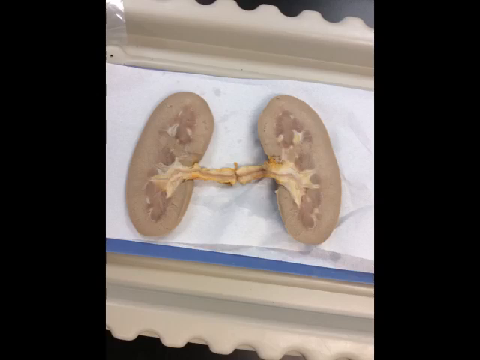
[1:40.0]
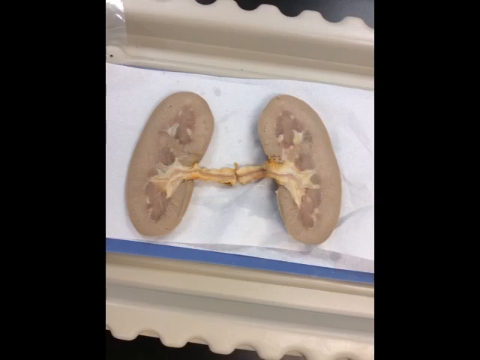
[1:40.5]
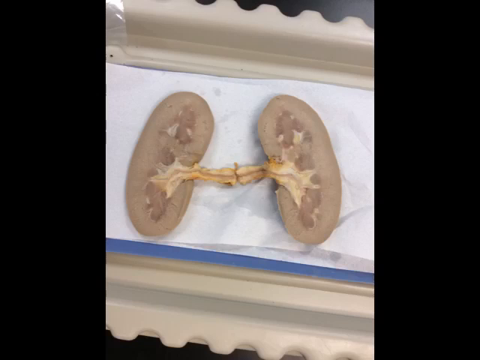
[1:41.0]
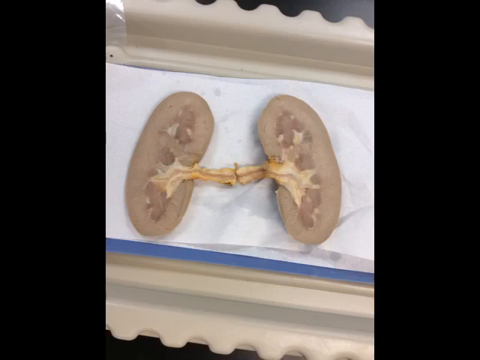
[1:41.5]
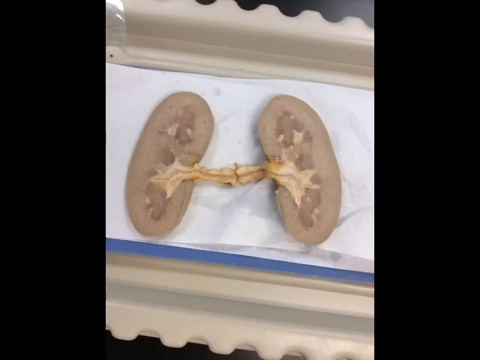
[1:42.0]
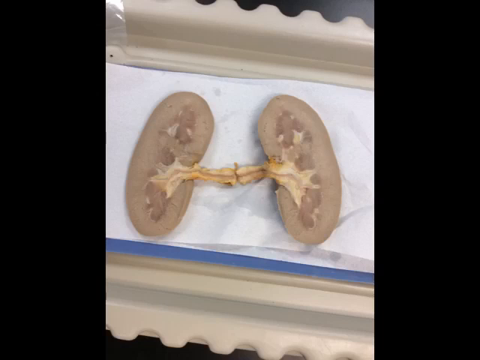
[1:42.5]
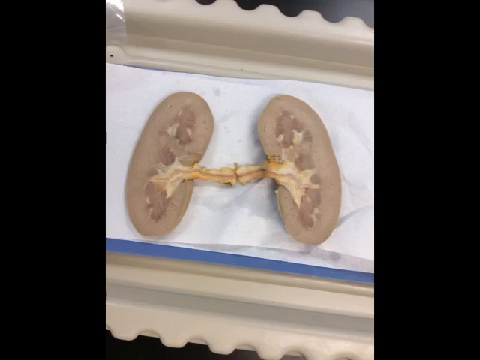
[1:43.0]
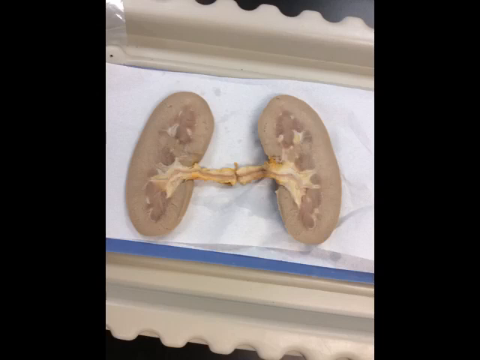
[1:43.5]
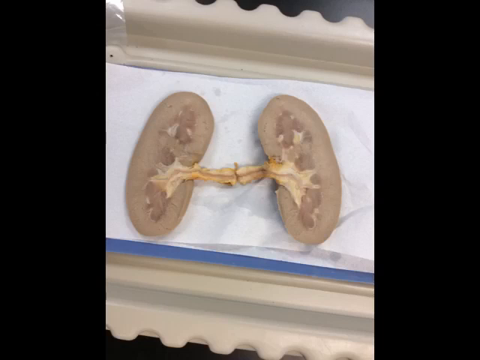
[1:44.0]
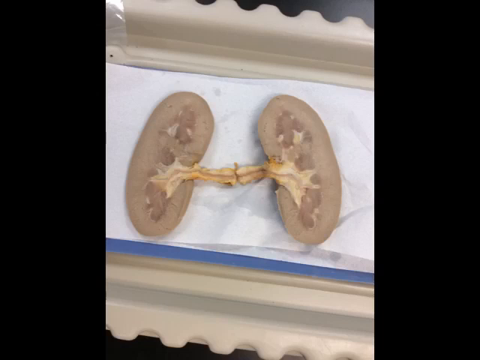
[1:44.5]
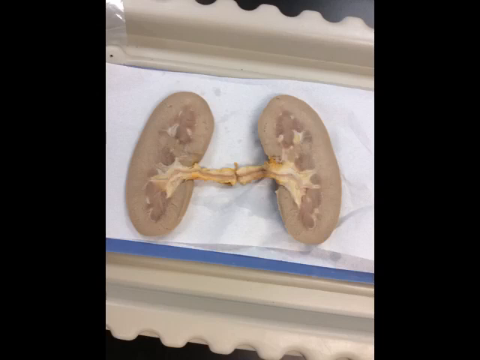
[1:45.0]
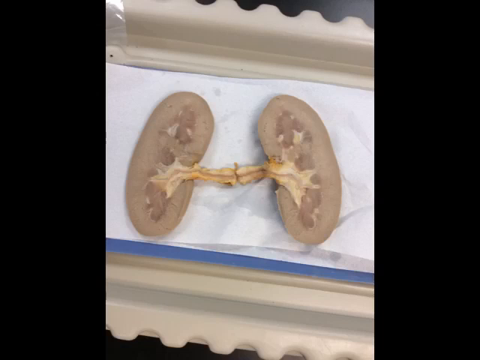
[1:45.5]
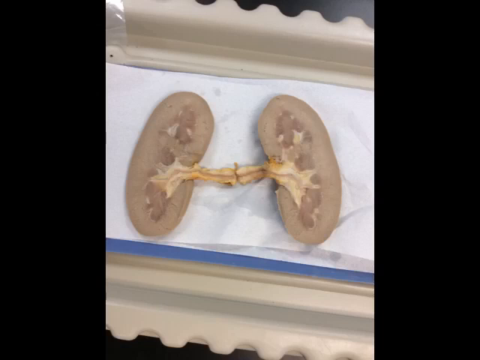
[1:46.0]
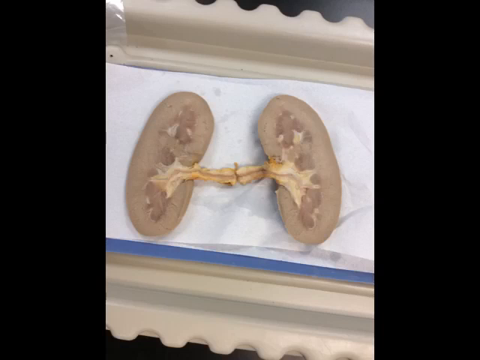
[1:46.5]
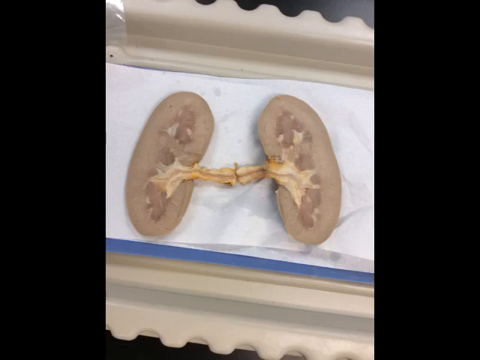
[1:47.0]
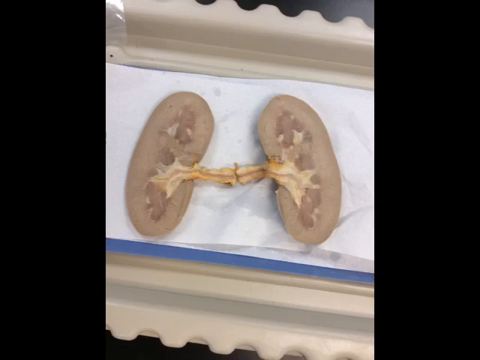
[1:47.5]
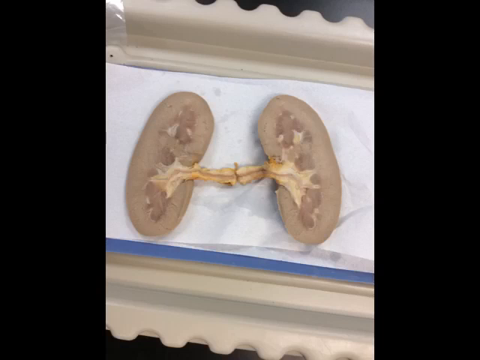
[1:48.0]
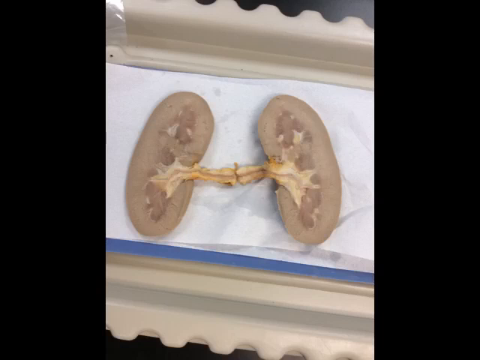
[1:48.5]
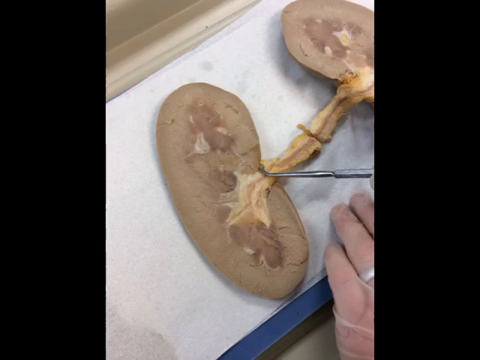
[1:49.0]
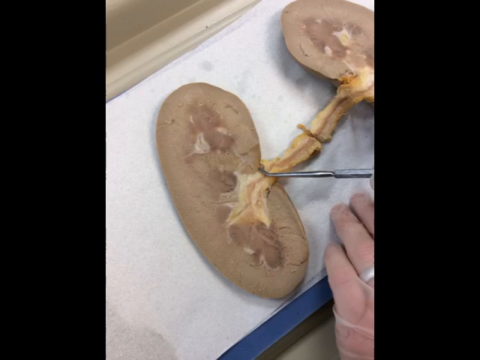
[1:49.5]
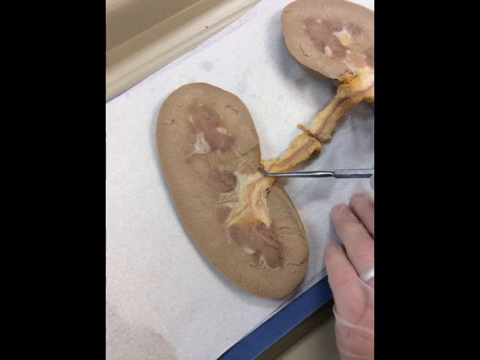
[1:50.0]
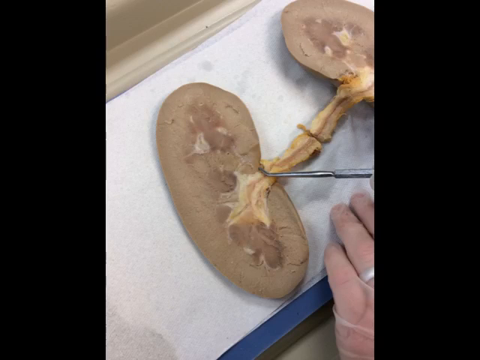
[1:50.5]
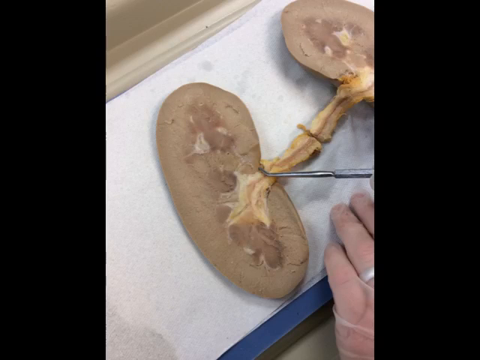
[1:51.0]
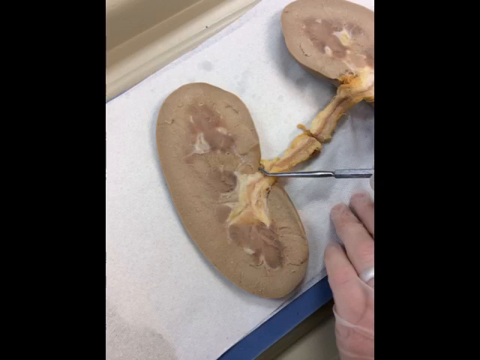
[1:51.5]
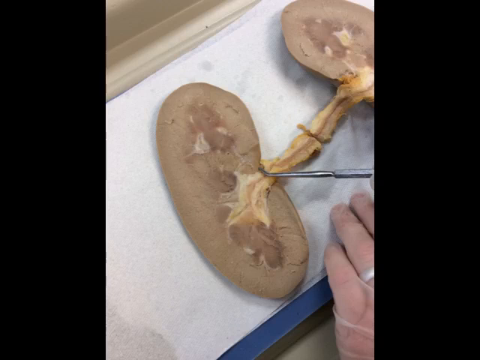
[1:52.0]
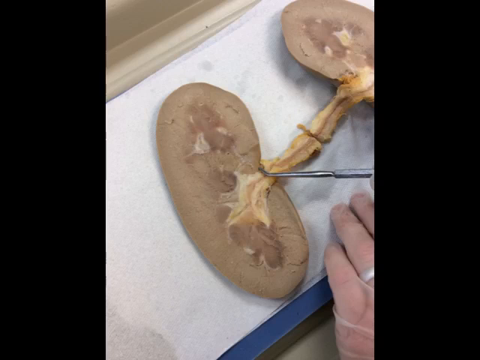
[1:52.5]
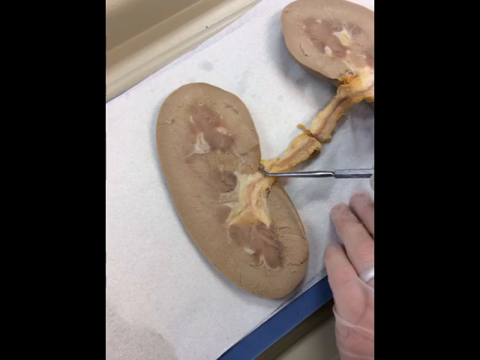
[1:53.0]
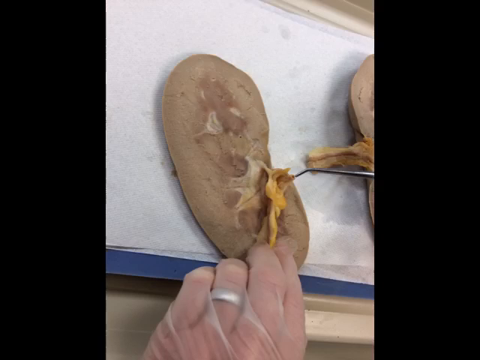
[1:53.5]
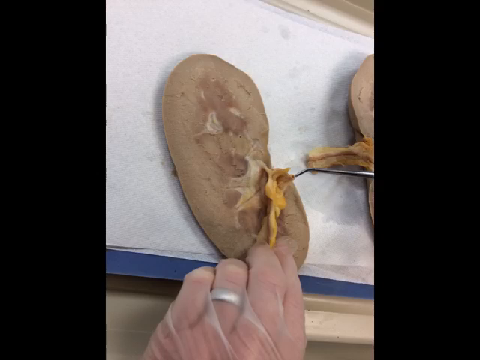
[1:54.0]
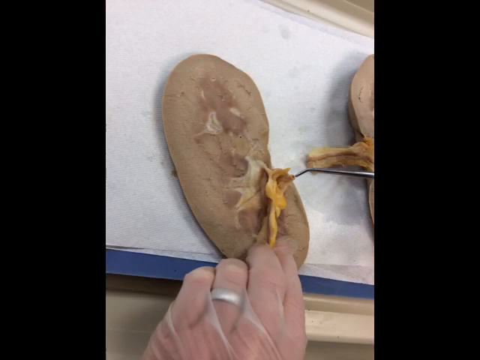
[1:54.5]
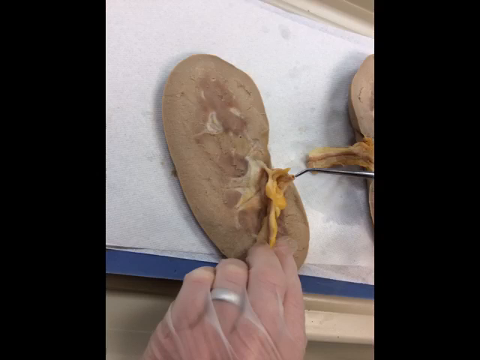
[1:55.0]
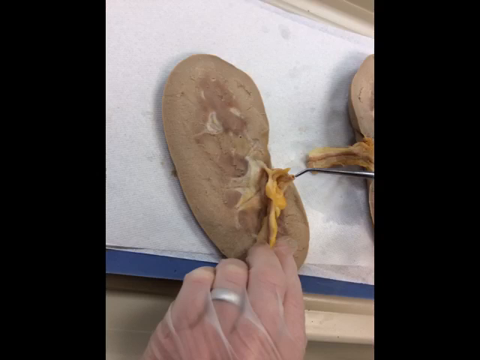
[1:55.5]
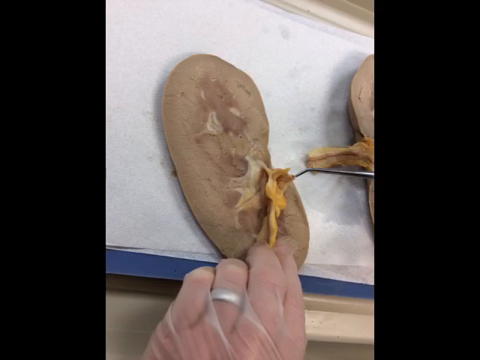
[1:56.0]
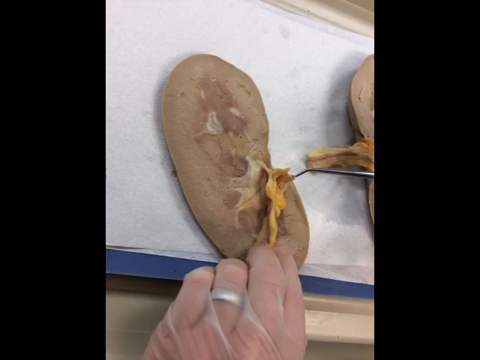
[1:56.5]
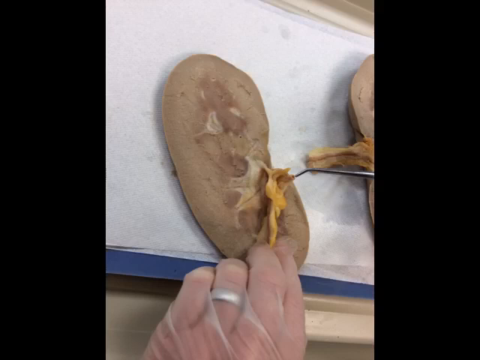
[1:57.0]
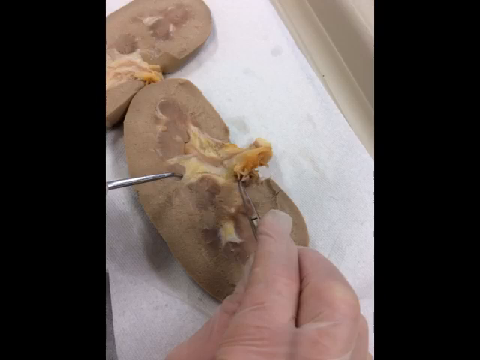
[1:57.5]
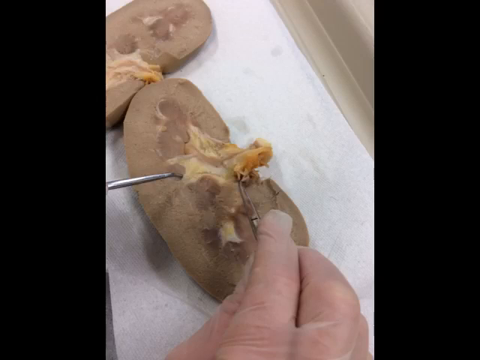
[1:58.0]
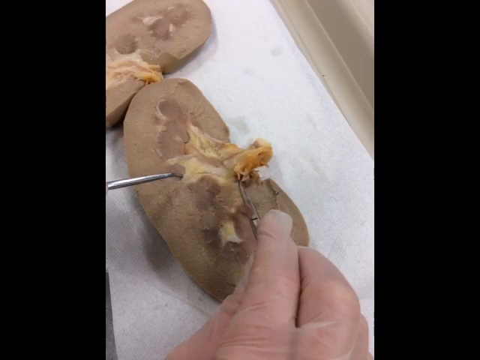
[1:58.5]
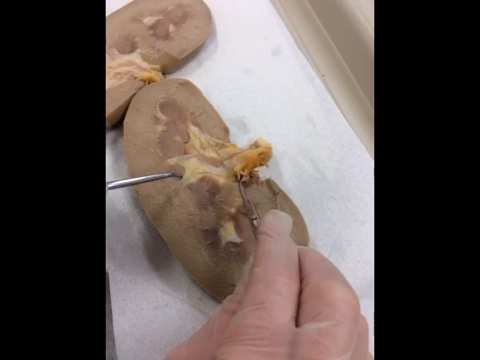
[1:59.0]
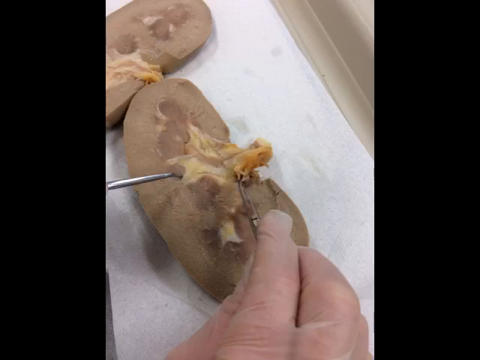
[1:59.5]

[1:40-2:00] A human kidney that has been cut completely in half with a scalpel lies on a table covered with a white cloth or a white piece of paper, with the right half and the left half visible. In another image, the person points a tool at a specific area on the inside of the kidney, and it looks like they have cut the strand that was kind of holding the two halves together, leaving the kidney in two pieces.